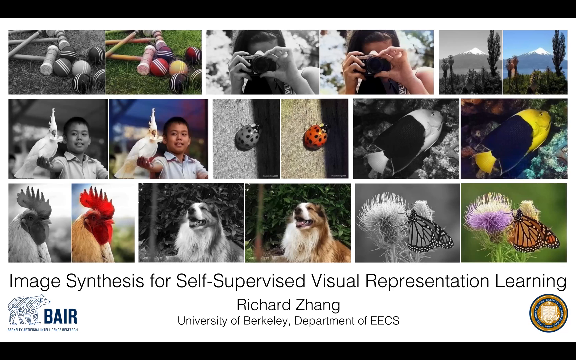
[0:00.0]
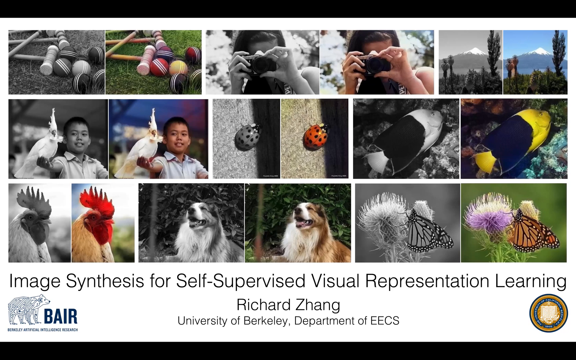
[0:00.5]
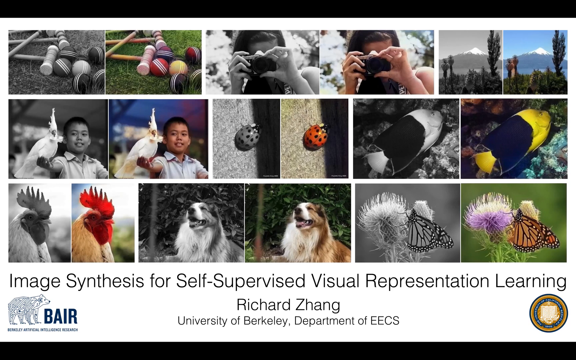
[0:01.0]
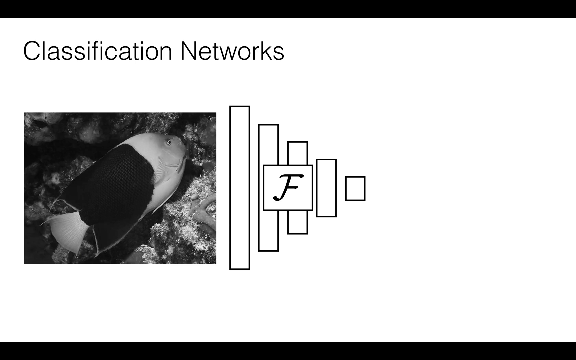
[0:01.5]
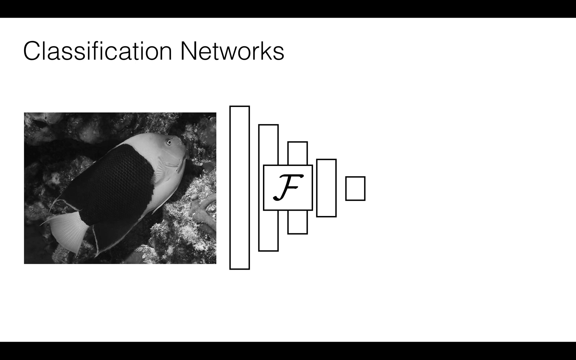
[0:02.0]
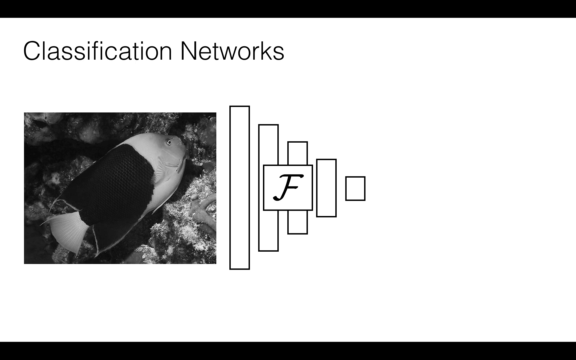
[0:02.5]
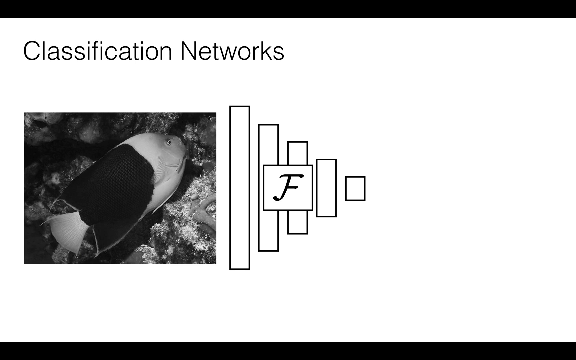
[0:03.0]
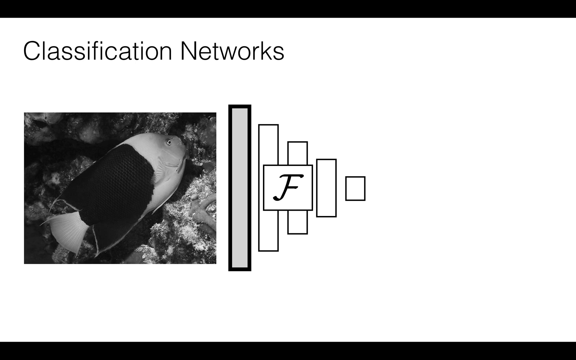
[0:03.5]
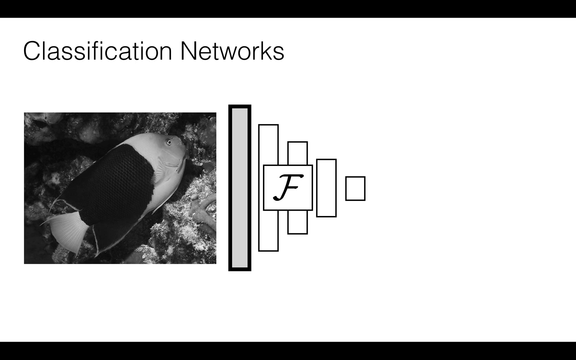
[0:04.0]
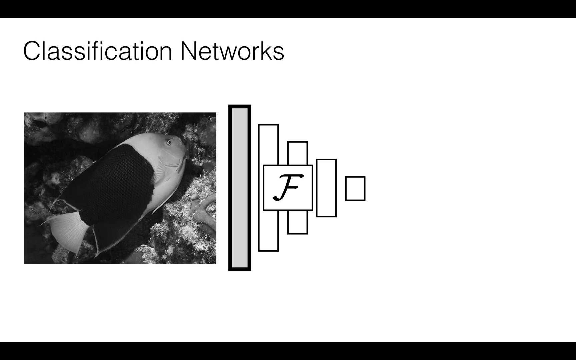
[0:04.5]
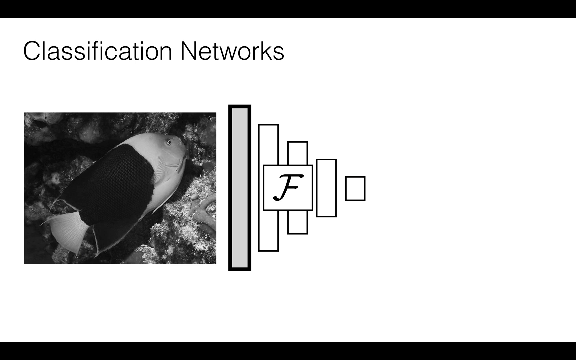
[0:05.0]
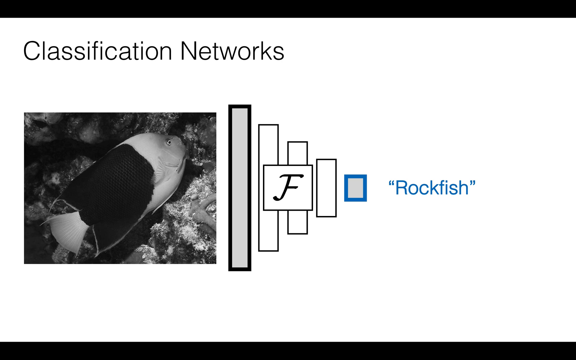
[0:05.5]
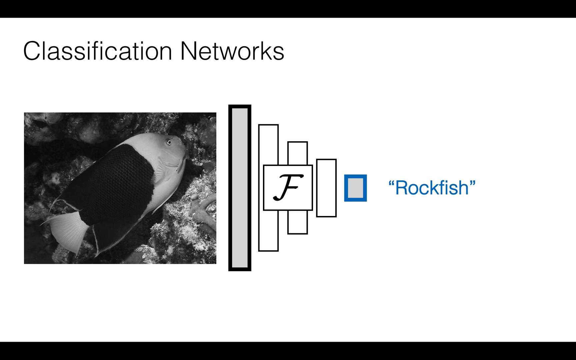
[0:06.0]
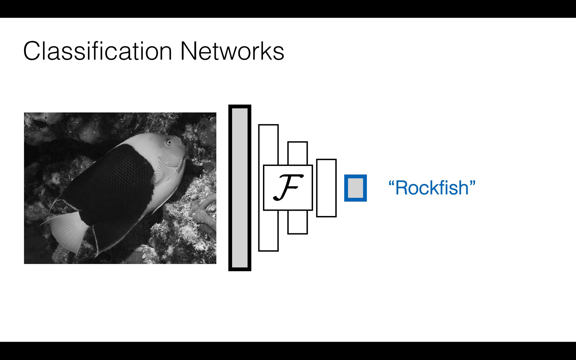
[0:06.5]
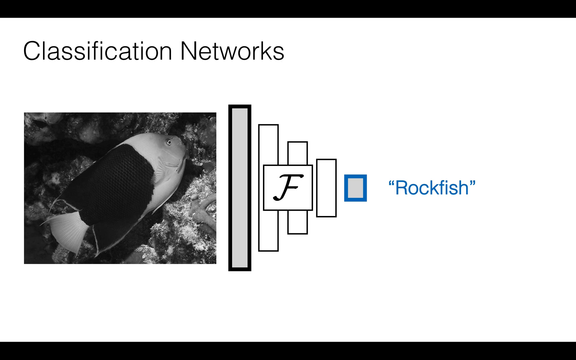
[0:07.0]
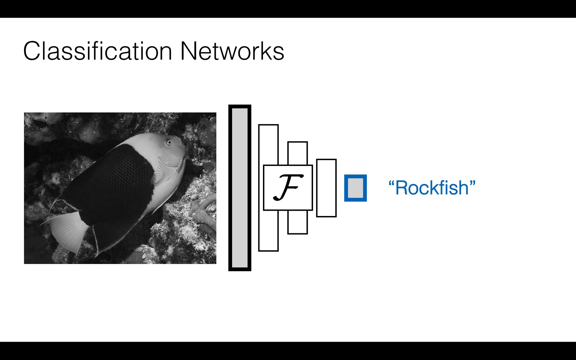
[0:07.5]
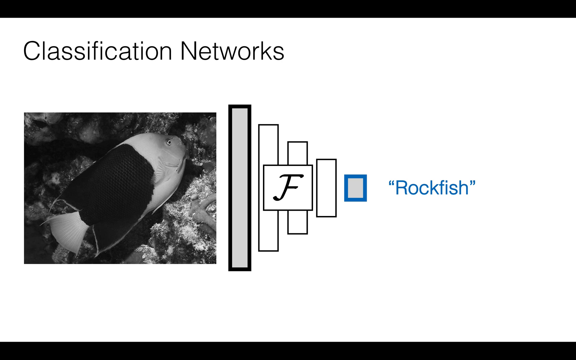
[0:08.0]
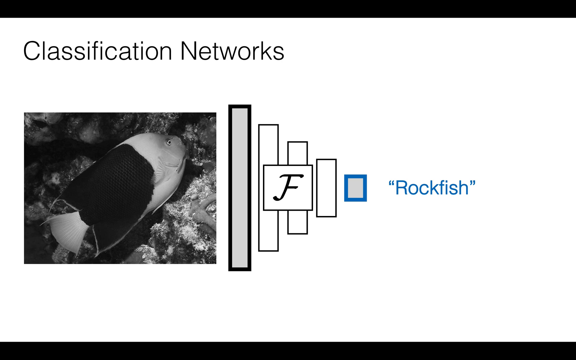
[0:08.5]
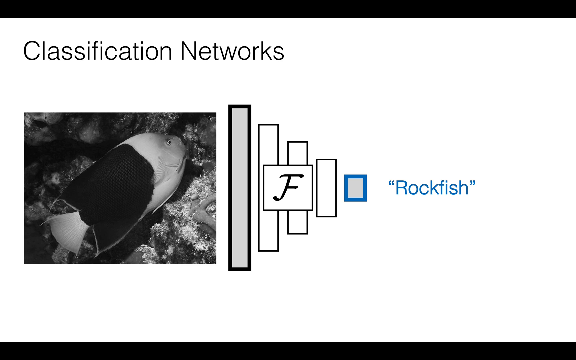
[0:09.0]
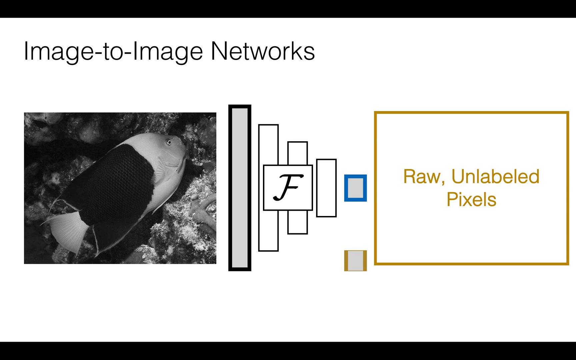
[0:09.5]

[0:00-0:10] The video opens with a grid of images. In the top left is a gray image in a small square box, and to its right is the same image in color; this pairing repeats two more times across the top row. The top-left image appears to show some type of sports balls along with hammer-like mallets for hitting them; in the colored version the balls are red, yellow and black. To the right is a woman with white skin and dark brown hair, holding a camera with both hands and aiming it toward the viewer. The last photo in the top right is a nature scene with a mountain in the background. In the middle row, one photo shows a young boy holding a bird, to its right is a ladybug on a wall, and to the right of that is a fish in the sea. The bottom row shows a chicken on the left, a brown and white furred dog, and a butterfly on a flower. At the bottom middle, text reads "image synthesis for self-supervised visual representation learning," and beneath it "Richard Zhang." The scene then changes to the words "classification networks" alongside the fish image from before, now in black and white. There also appears to be a sort of pyramid shape lying on its side, and at the top of this sideways pyramid is the word "rockfish" in blue text with blue exclamation points next to a blue-bordered square.